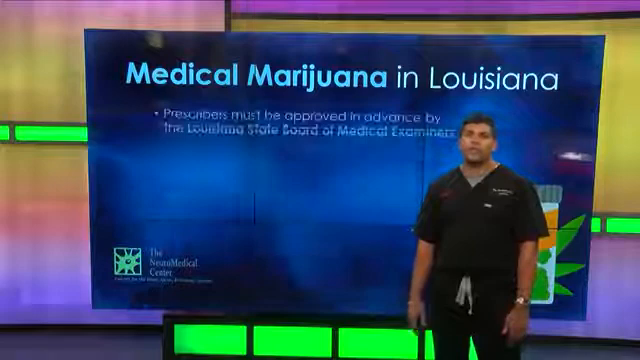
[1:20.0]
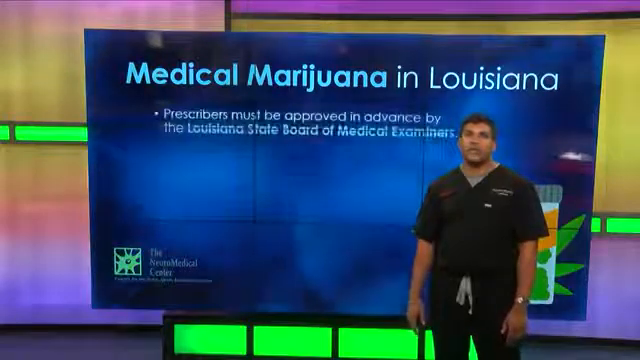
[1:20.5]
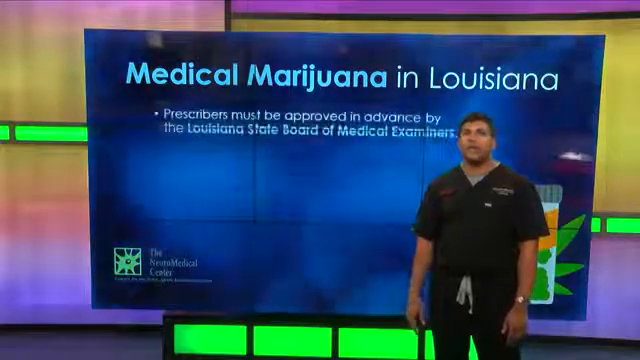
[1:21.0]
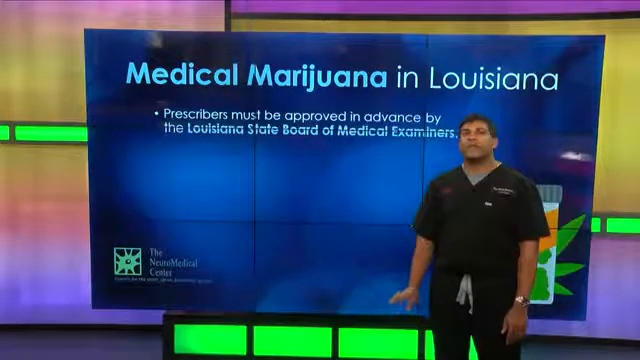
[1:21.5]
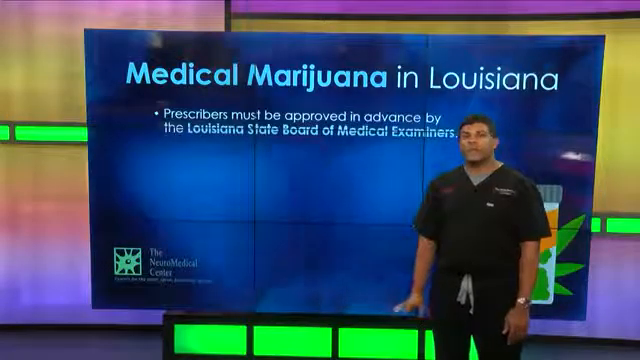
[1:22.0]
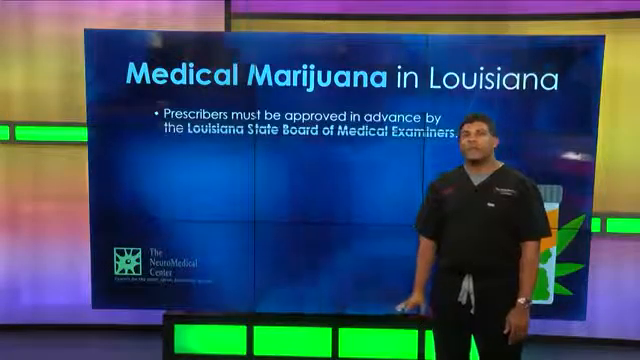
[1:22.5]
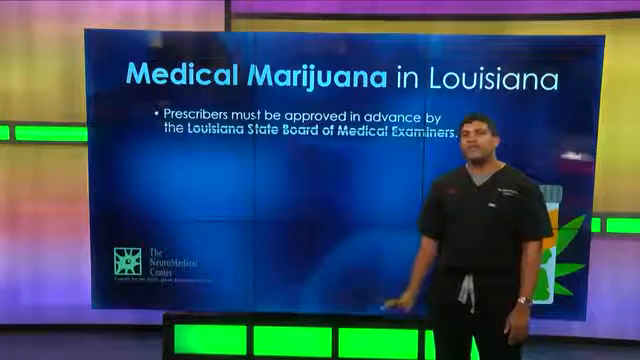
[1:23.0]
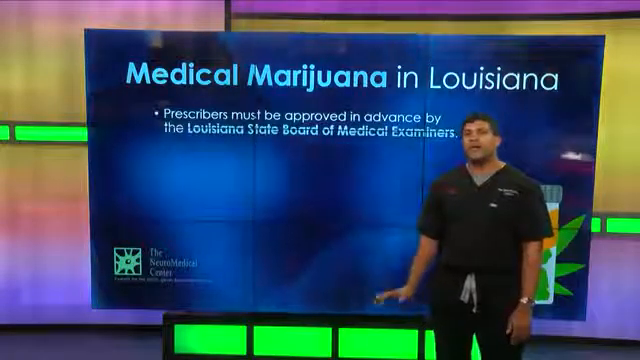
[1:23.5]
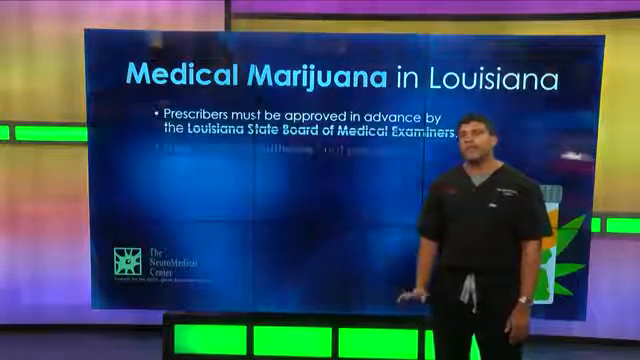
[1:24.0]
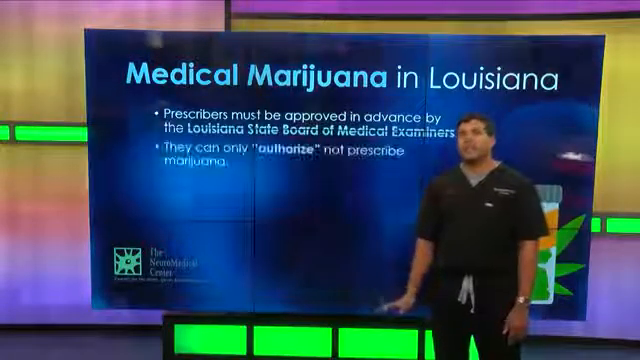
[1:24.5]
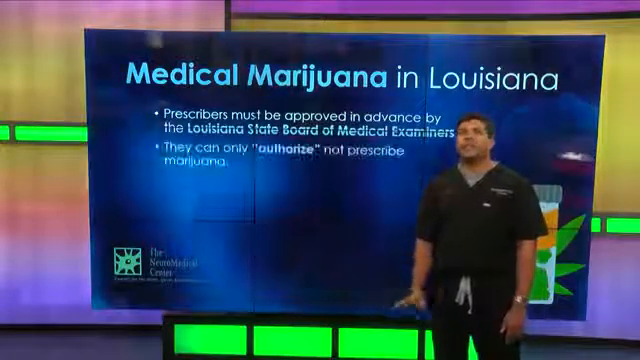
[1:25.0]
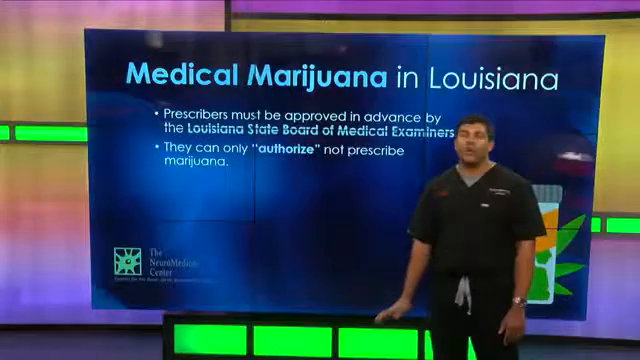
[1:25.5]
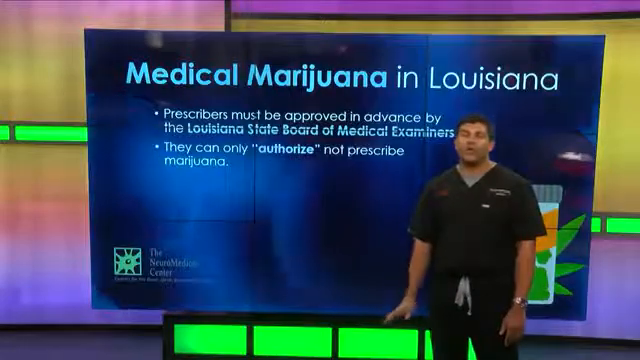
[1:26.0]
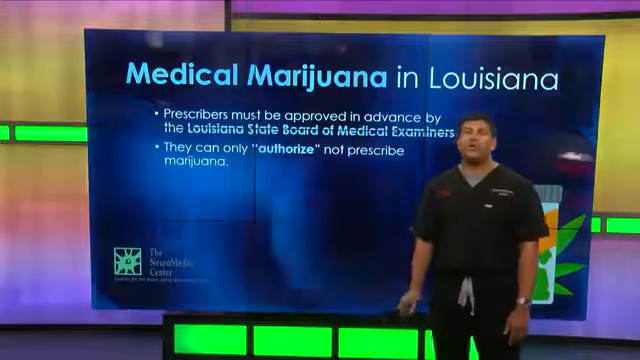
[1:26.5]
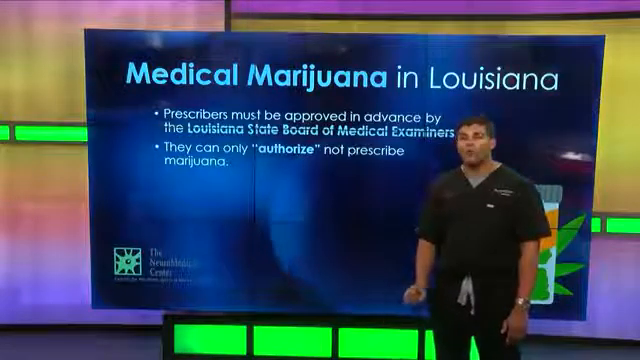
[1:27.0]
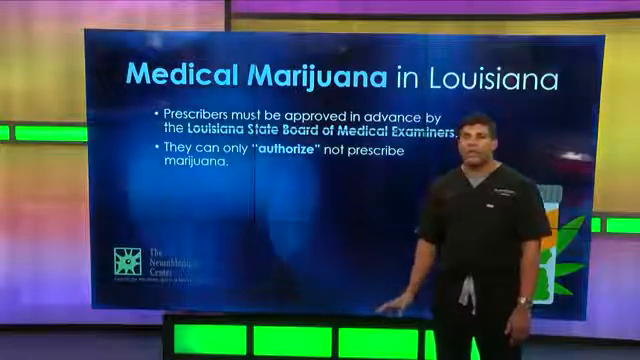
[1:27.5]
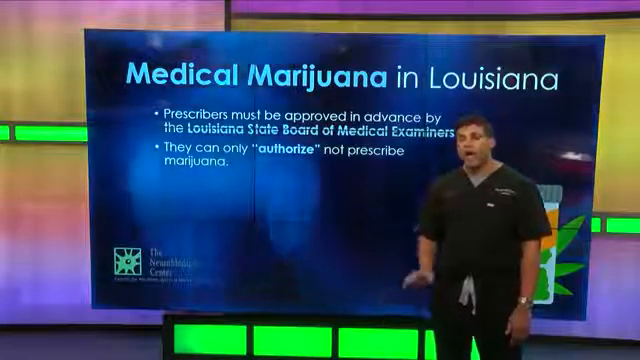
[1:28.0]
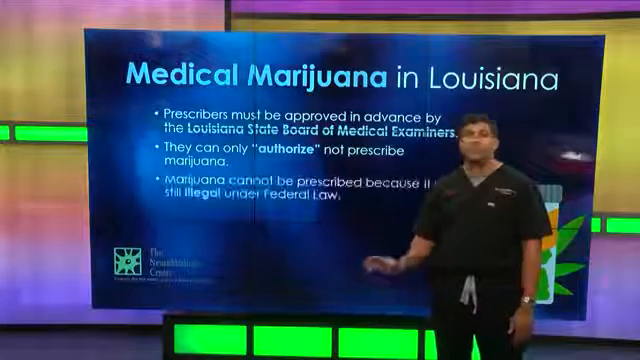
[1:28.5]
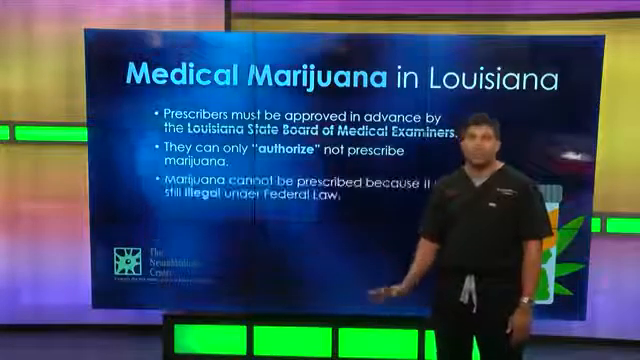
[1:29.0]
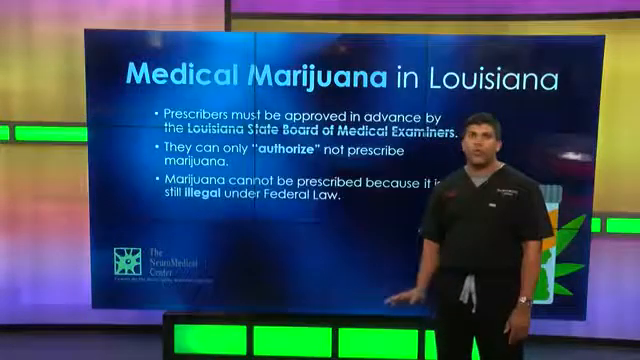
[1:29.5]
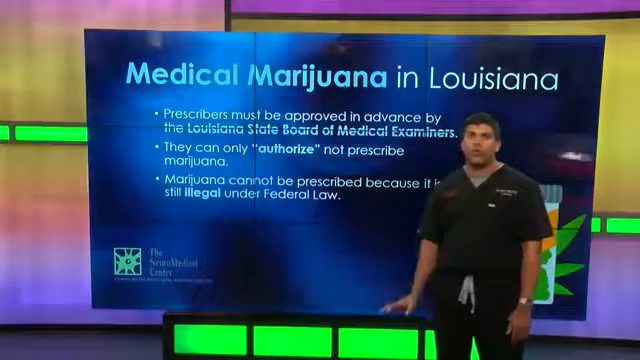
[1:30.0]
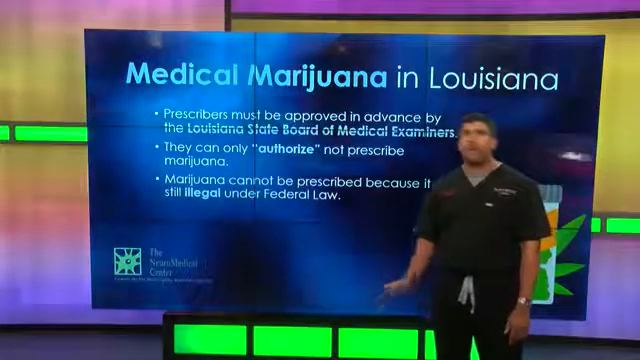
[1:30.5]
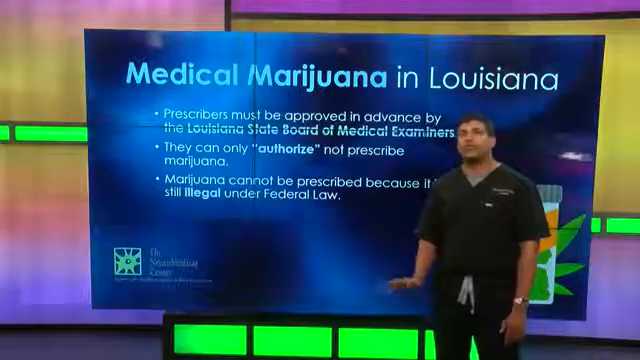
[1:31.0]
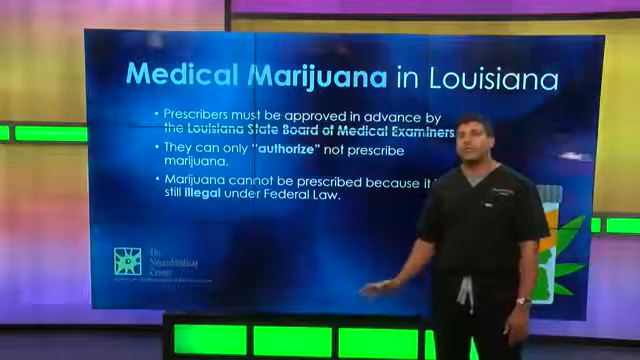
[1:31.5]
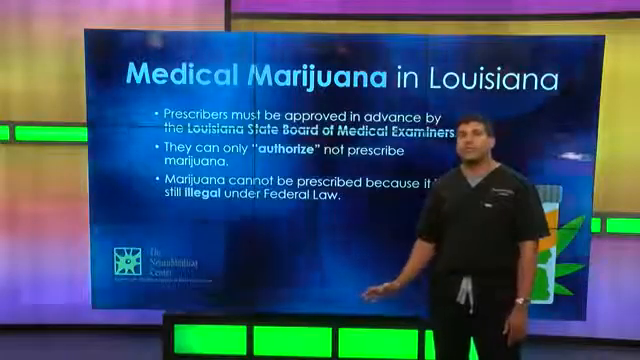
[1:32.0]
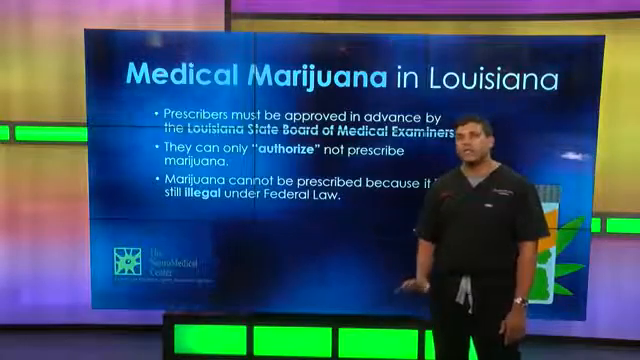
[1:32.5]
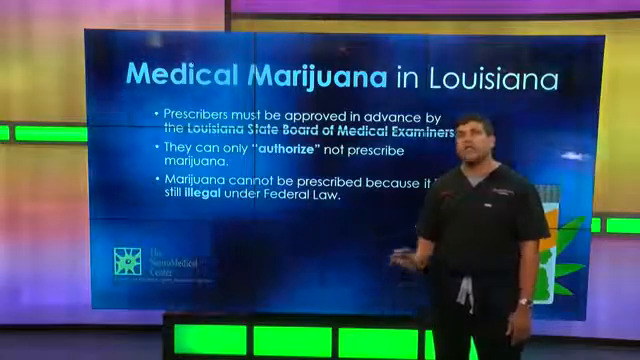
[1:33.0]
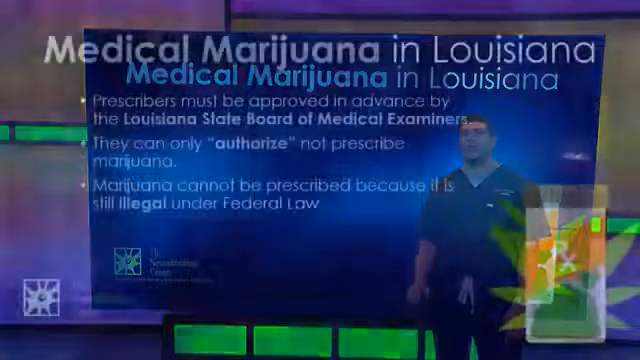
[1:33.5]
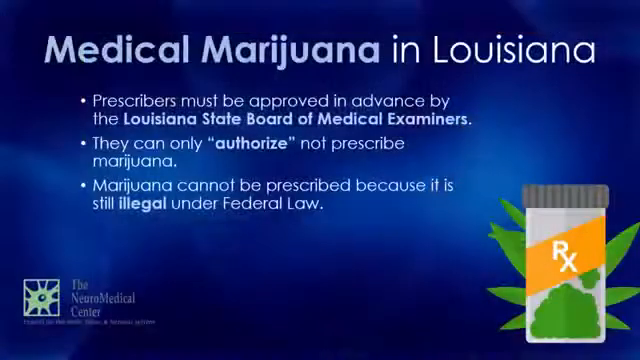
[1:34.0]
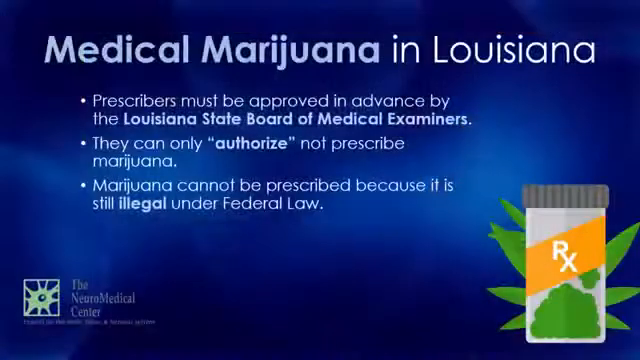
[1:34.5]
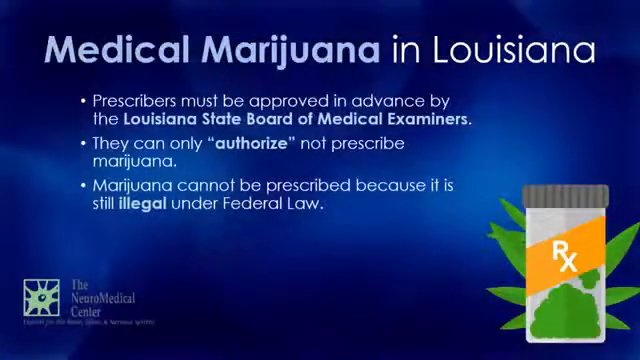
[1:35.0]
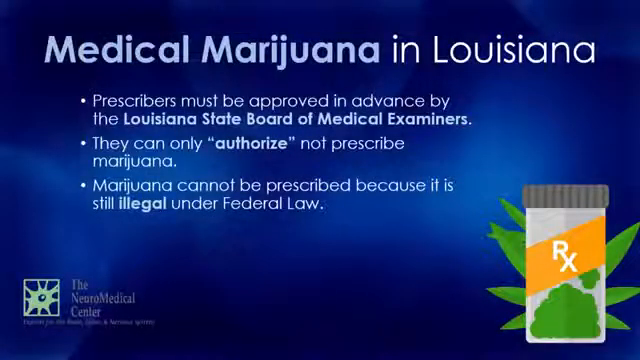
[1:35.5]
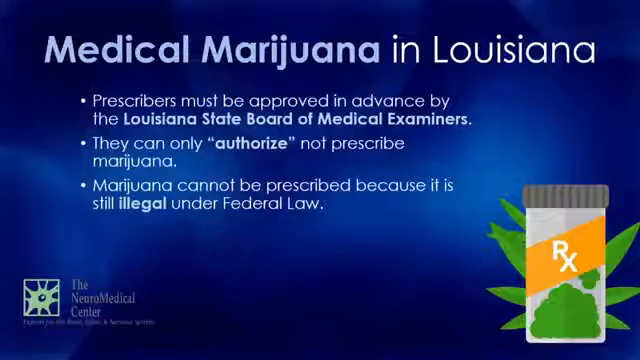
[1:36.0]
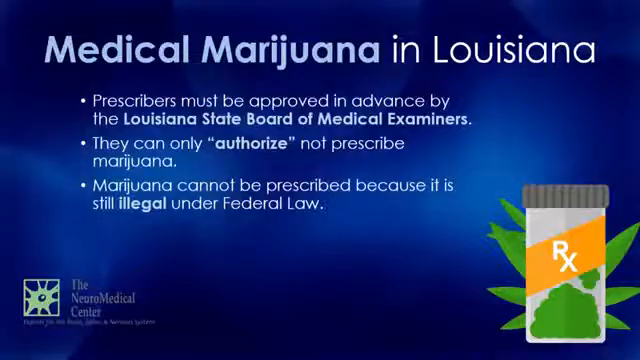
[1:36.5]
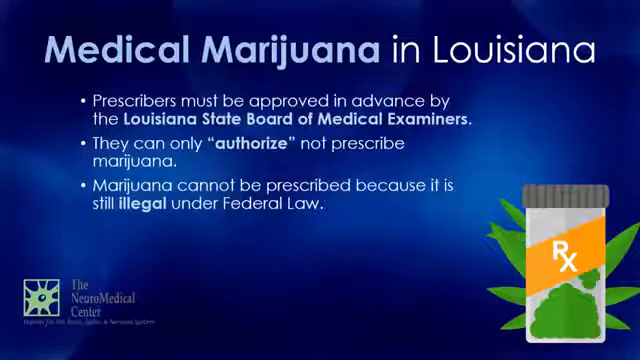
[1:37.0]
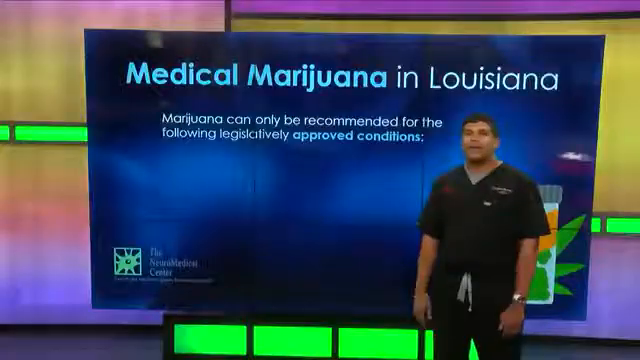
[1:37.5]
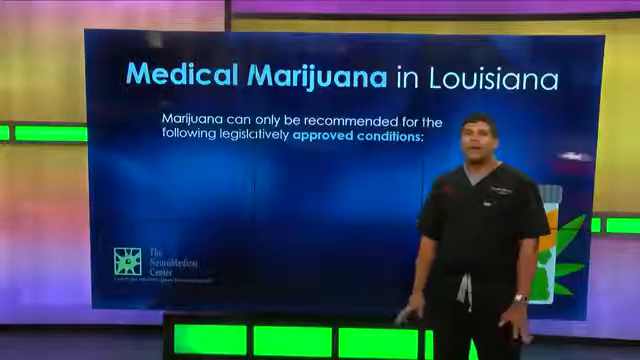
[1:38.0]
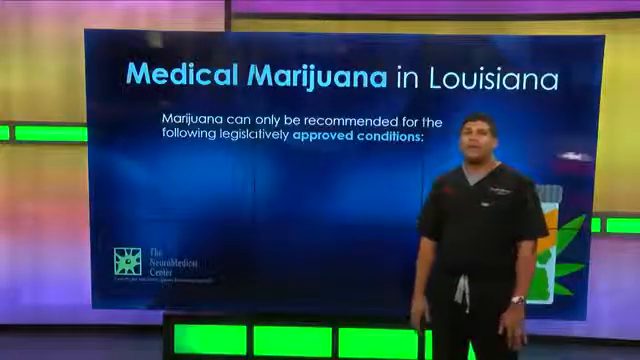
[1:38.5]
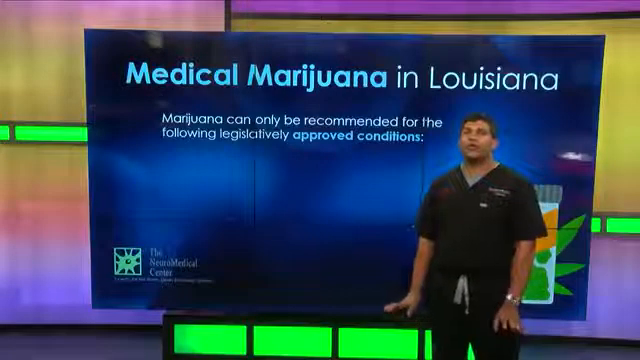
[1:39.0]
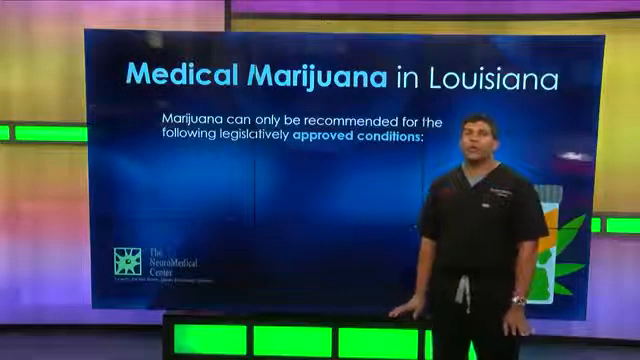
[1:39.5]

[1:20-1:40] The newsroom has two backgrounds. The furthest one has pale green, neon green and lavender. The screen in front has dark blue and lighter blues like orbs, with text reading "medical marijuana in Louisiana," followed by a bullet point about the Louisiana State Board of Medical Examiners. A doctor in black scrubs in front of that screen talks and emphasizes his points with hand gestures as more bullet points and text about medical marijuana appear on the screen. The video transitions to a close-up of the front screen showing "medical marijuana in Louisiana" and three bullet points about the law on medical marijuana. In the bottom right corner is a prescription pill box with an Rx symbol and marijuana leaves behind it and on its front; to the left is a logo for the Neuromedical Center. The video returns to the newsroom, where the doctor continues to talk and gesture as bullet points and text appear on the blue screen behind him.